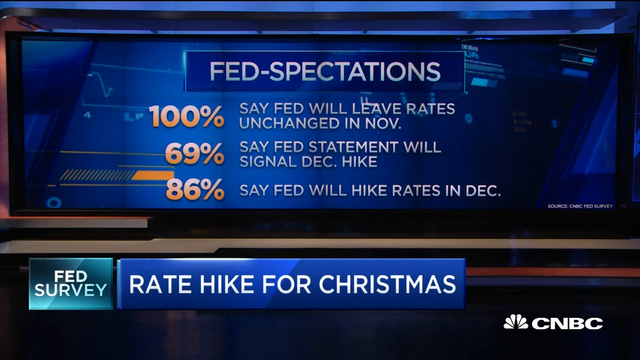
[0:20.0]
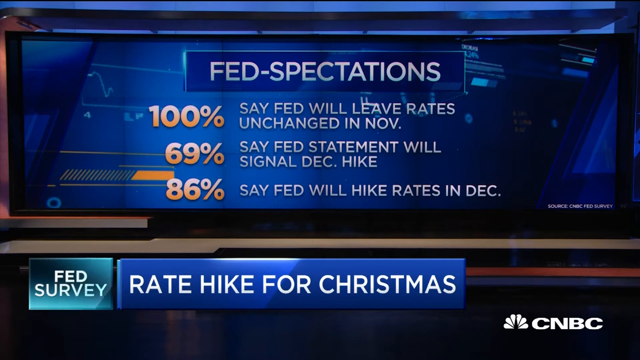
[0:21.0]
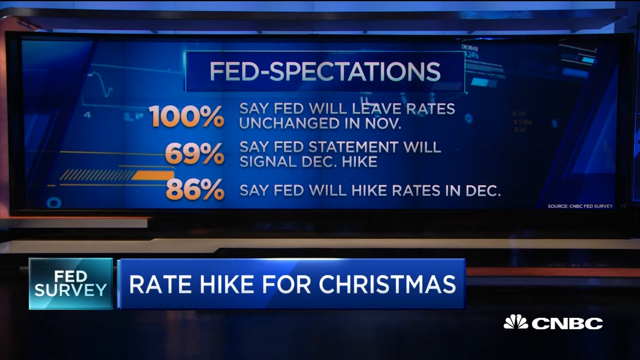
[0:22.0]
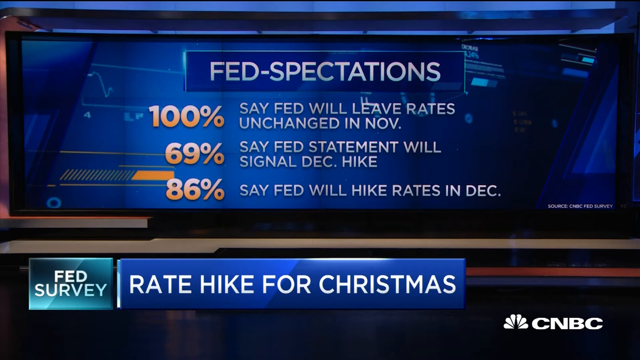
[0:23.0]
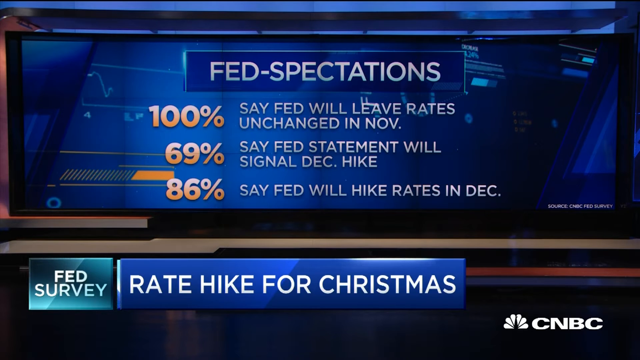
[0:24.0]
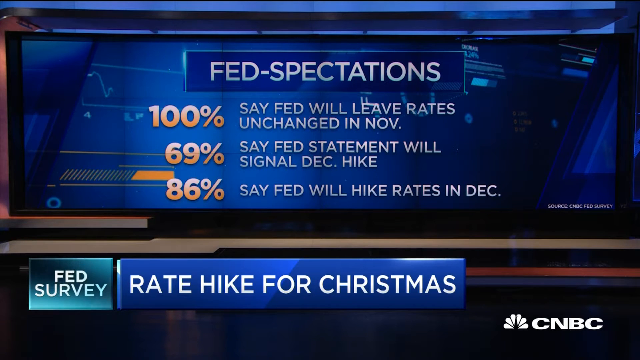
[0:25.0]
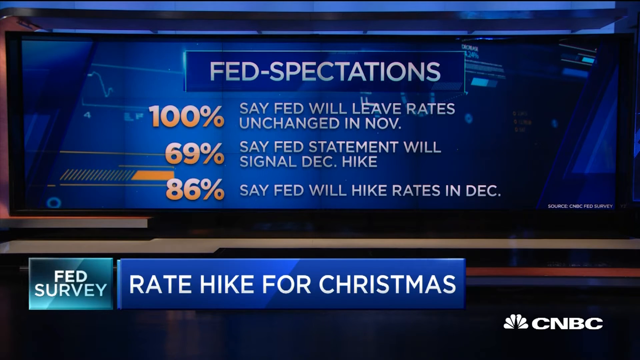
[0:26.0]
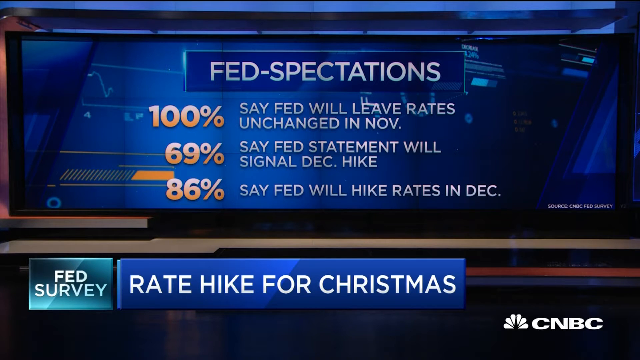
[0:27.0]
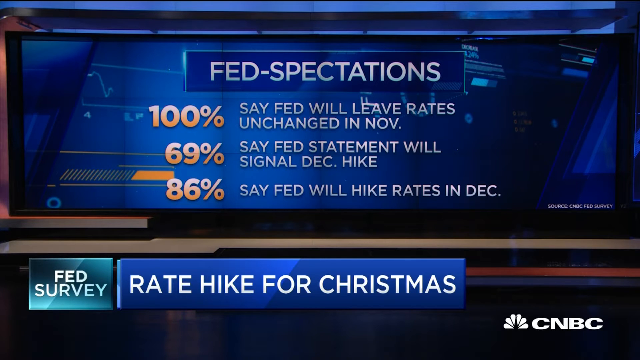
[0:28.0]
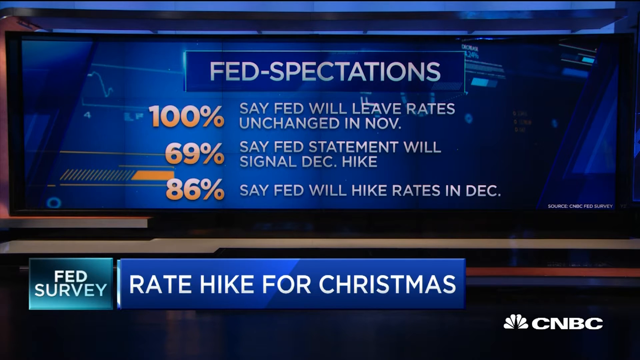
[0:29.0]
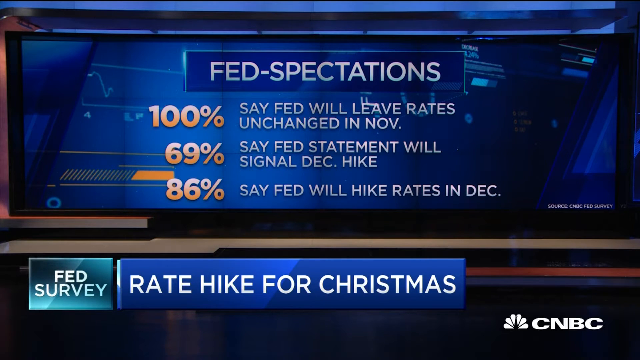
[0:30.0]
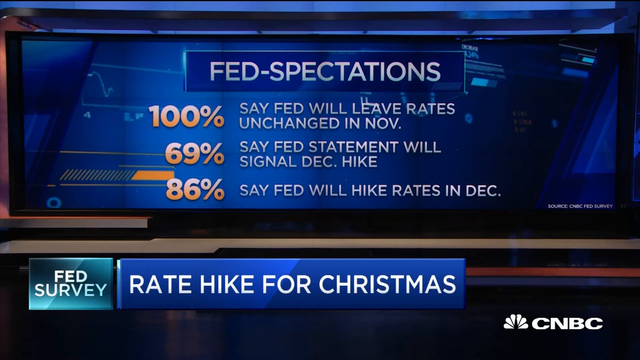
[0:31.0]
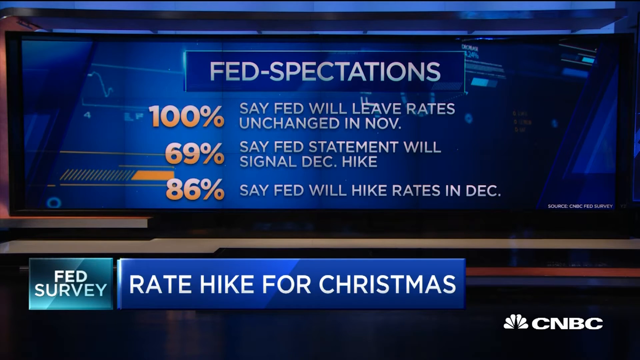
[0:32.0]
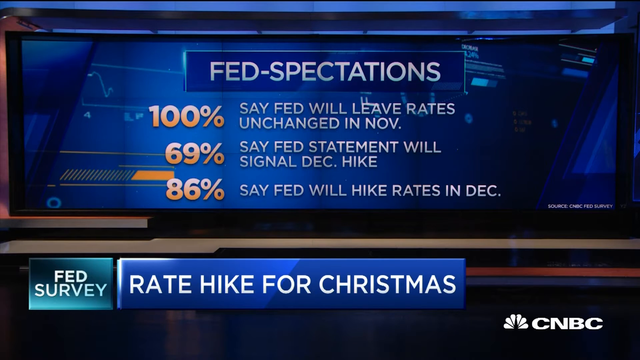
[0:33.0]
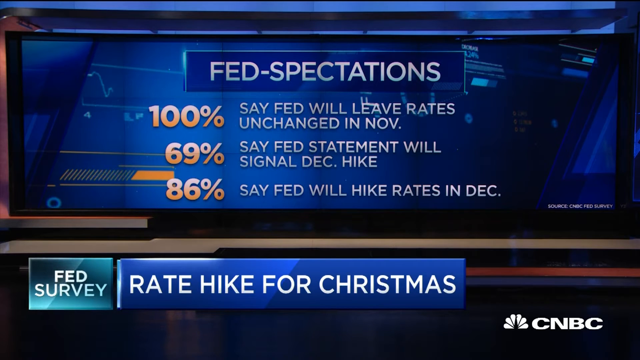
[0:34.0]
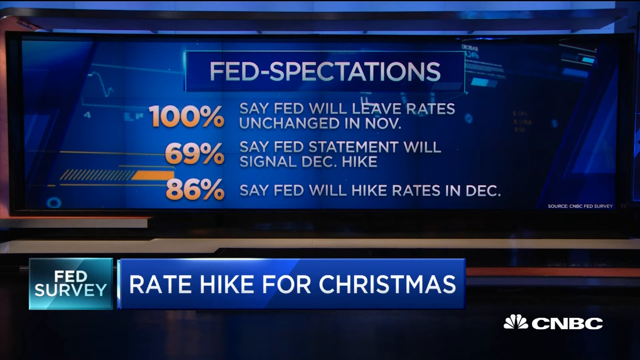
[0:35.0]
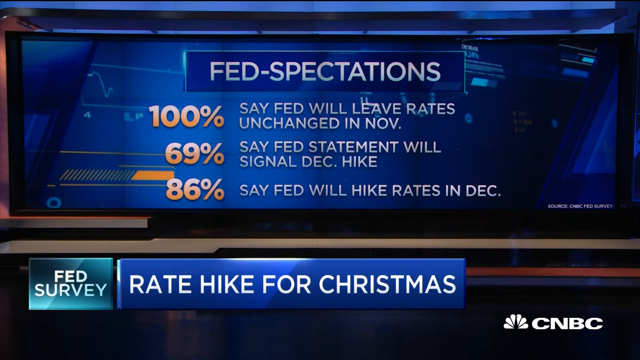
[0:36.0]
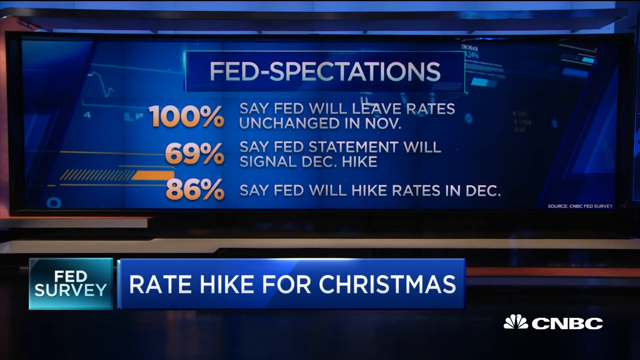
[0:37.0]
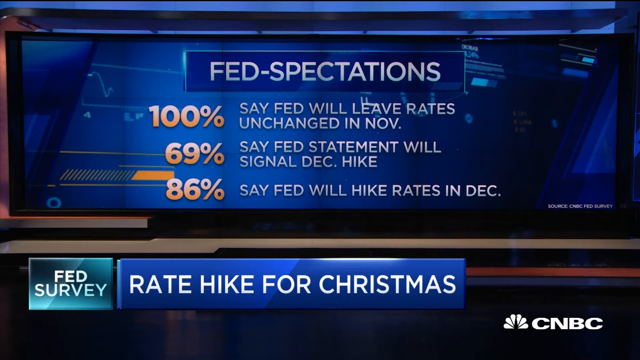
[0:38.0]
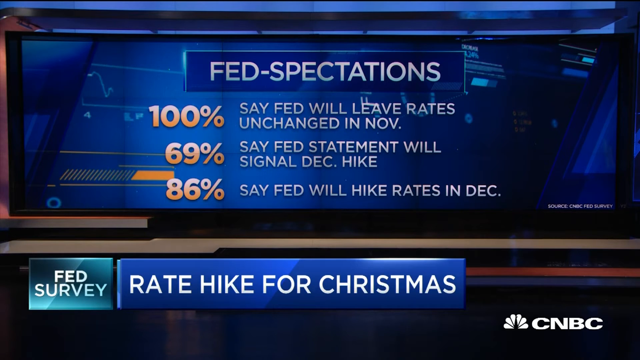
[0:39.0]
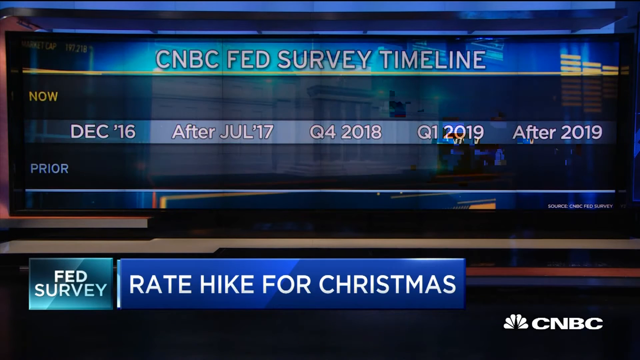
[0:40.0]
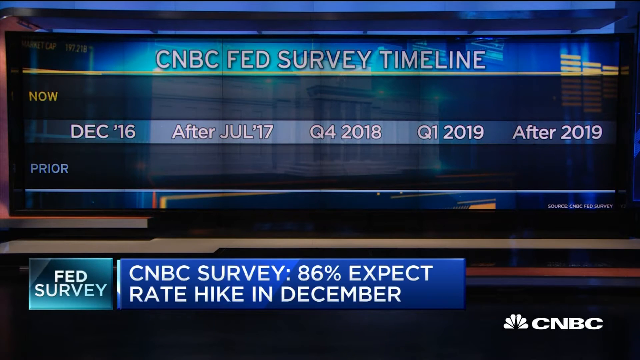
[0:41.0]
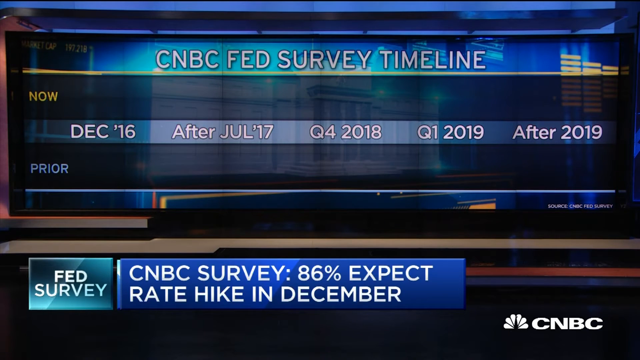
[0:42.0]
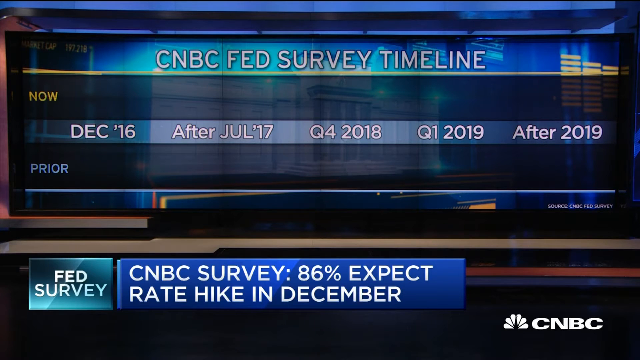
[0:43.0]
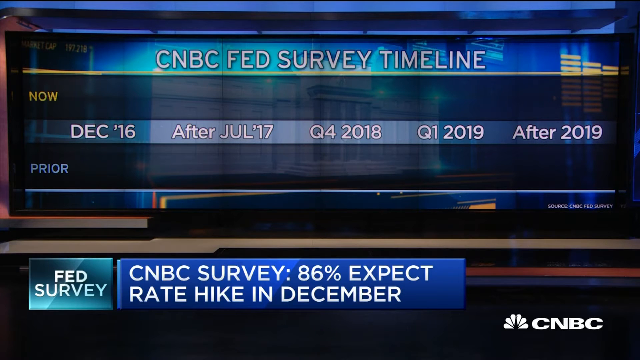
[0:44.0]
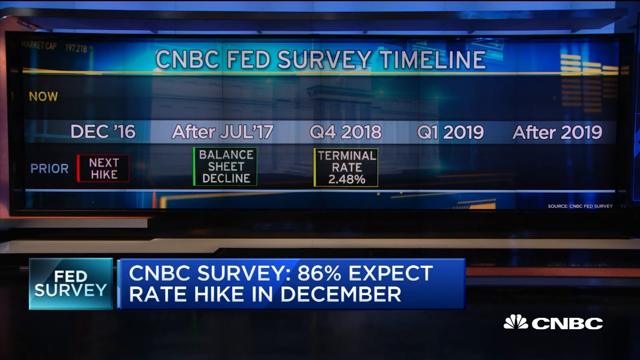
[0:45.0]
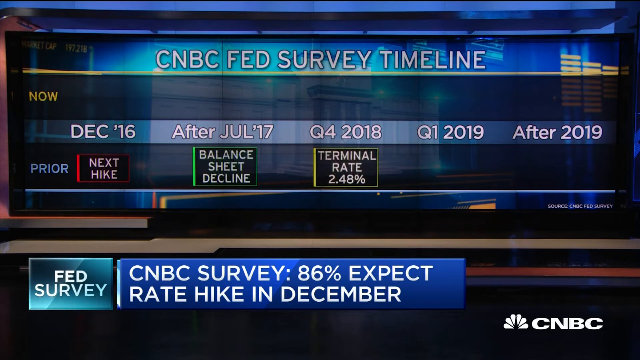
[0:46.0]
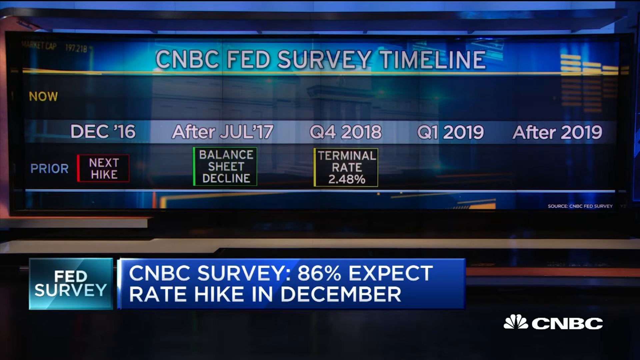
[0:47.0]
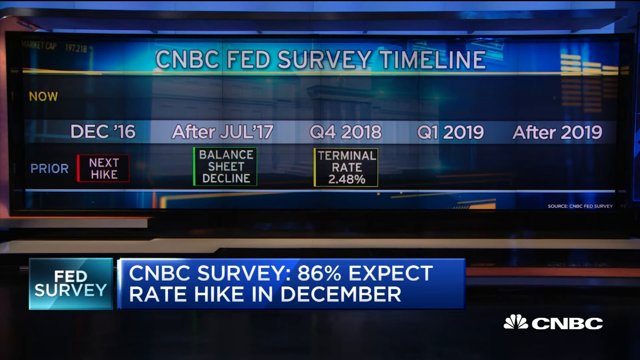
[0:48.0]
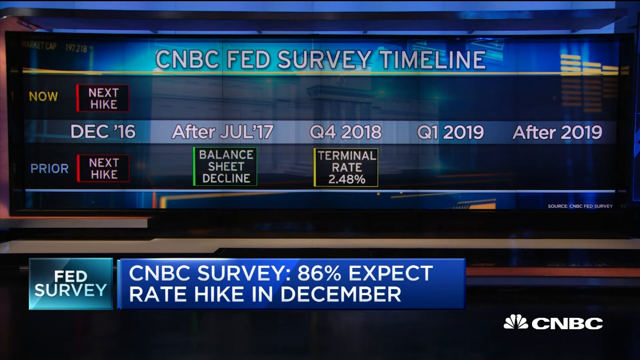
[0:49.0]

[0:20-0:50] The "fed survey" screen continues with "fed expectations": "100% say fed will leave rates unchanged in november", "69% say fed statement will signal december hike", and "86% say fed will hike rates in december", along with "rate hike for christmas". The man in the navy blue suit, sky blue shirt, and red or white tie has a smile on his face and is talking to someone while making gestures. A "CNBC fed survey timeline" appears, showing "now", "December 16", "after July 17", "Q4 2018", "Q1 2019", and "after 2019", followed by "prior", "next hike", "balance sheet decline", and lastly "terminal rate 2.48 percent". The fed expectations and "fed survey rate hike for christmas" text continue, and a line reads "CNBC Survey: 86% expect rate hike in december".